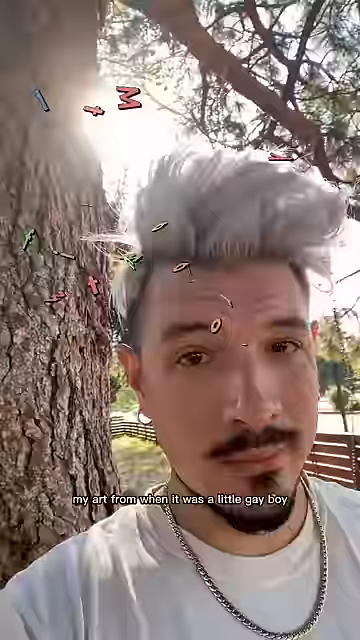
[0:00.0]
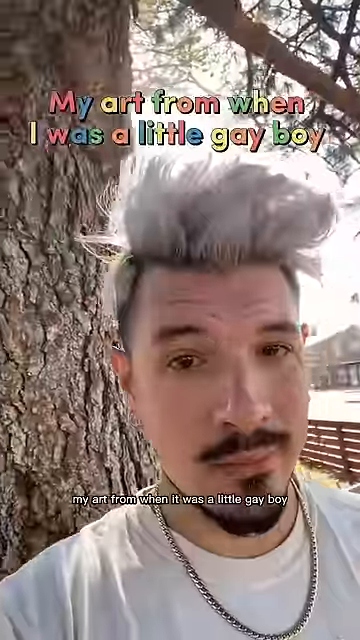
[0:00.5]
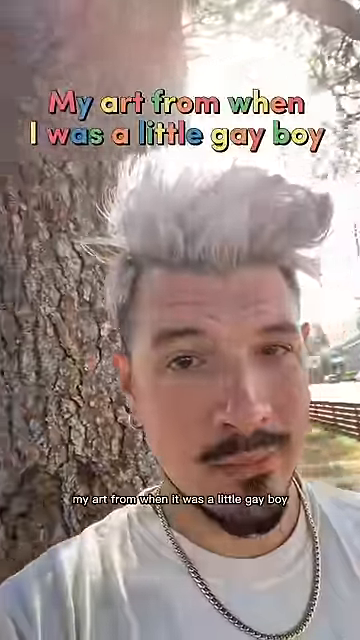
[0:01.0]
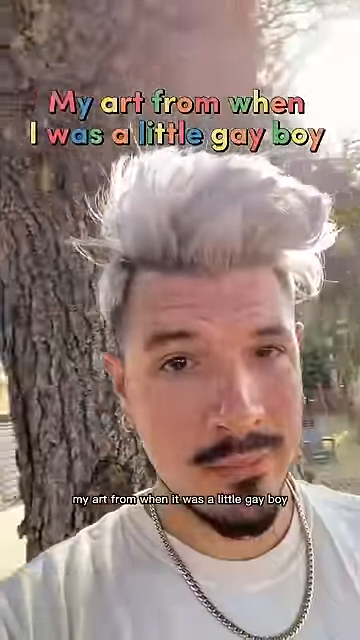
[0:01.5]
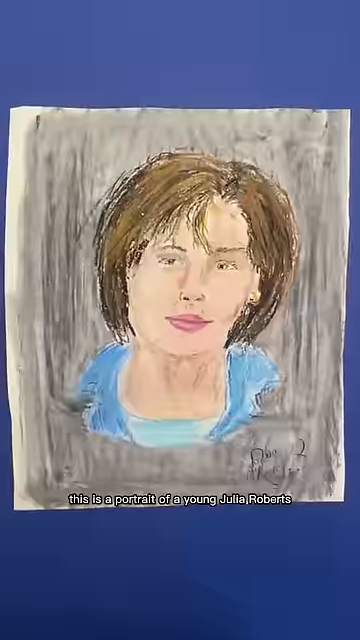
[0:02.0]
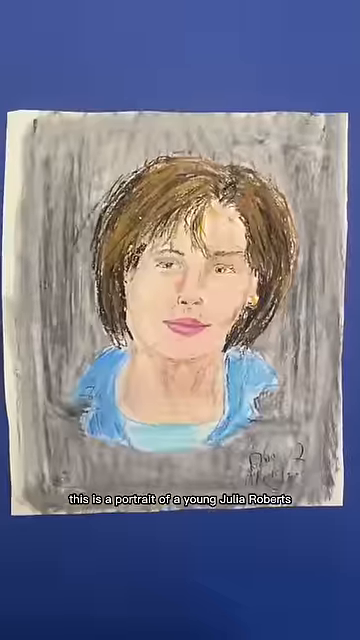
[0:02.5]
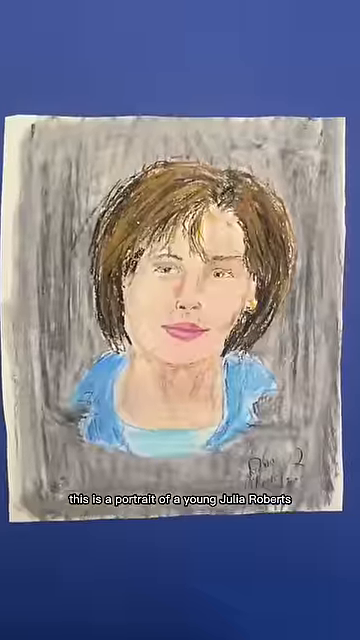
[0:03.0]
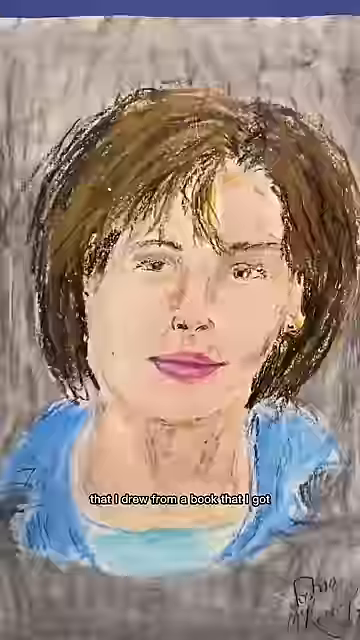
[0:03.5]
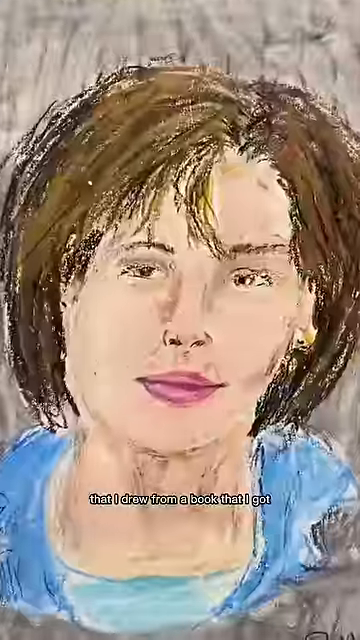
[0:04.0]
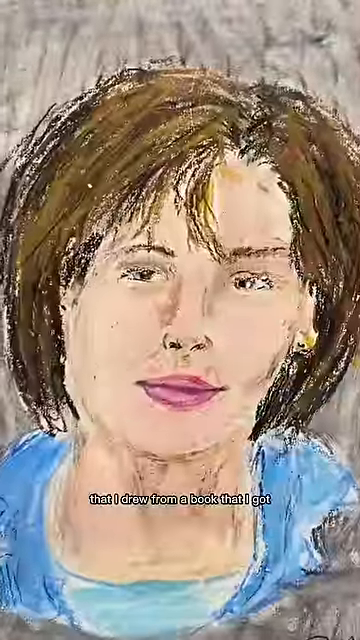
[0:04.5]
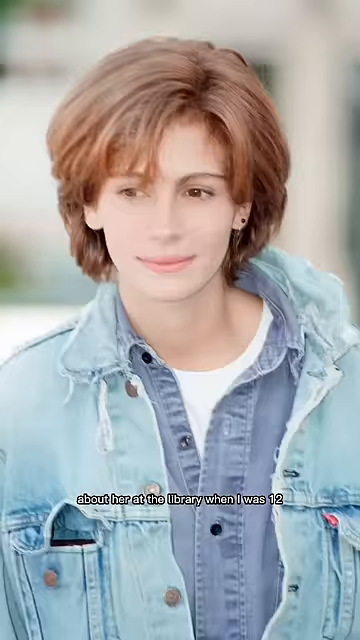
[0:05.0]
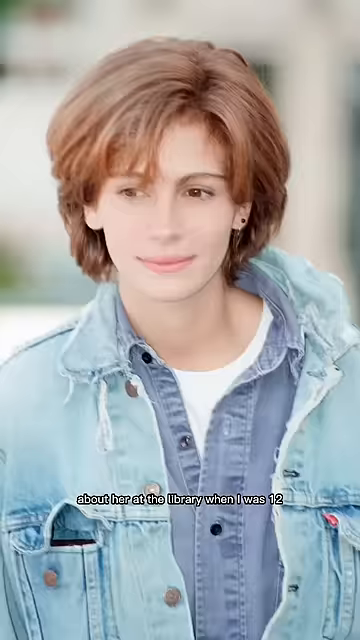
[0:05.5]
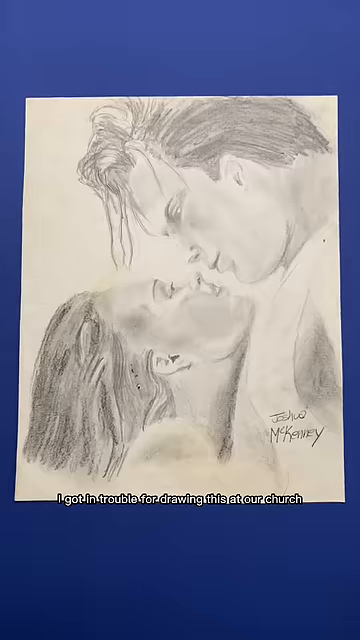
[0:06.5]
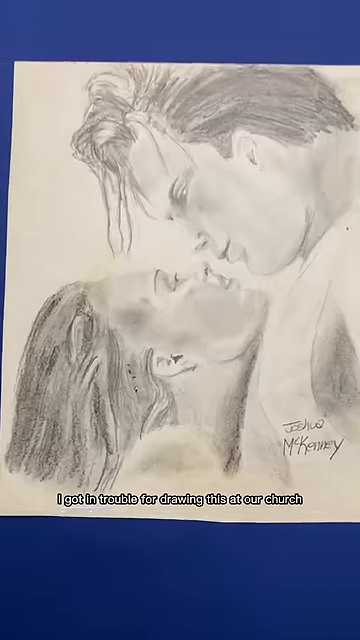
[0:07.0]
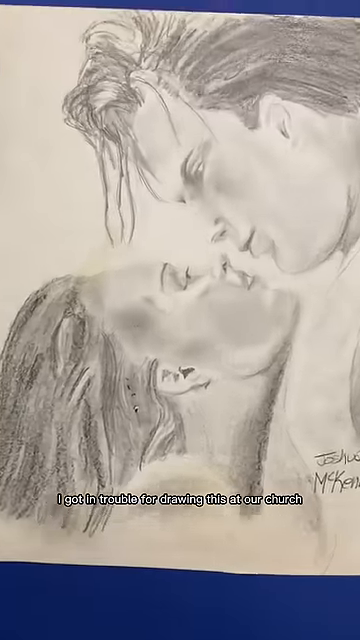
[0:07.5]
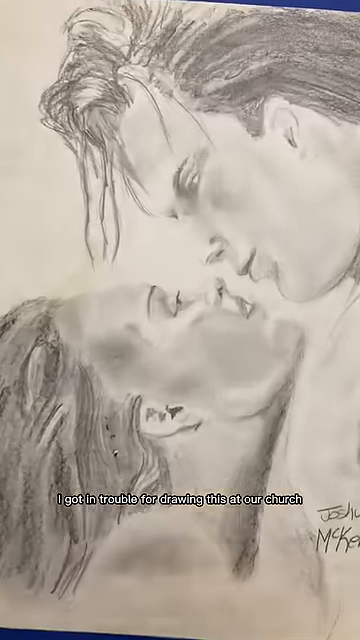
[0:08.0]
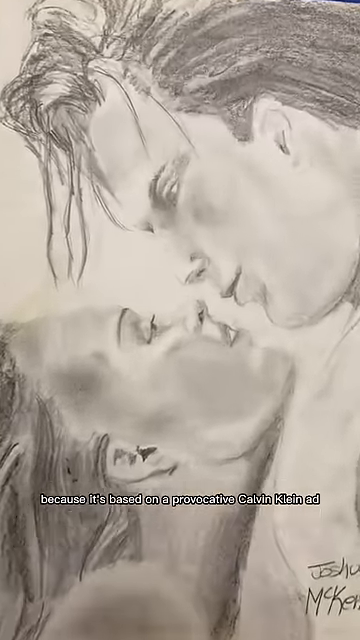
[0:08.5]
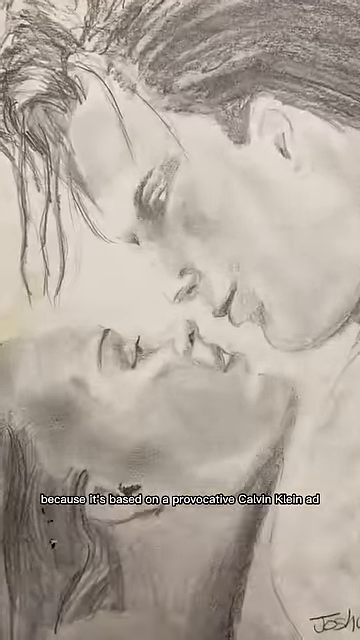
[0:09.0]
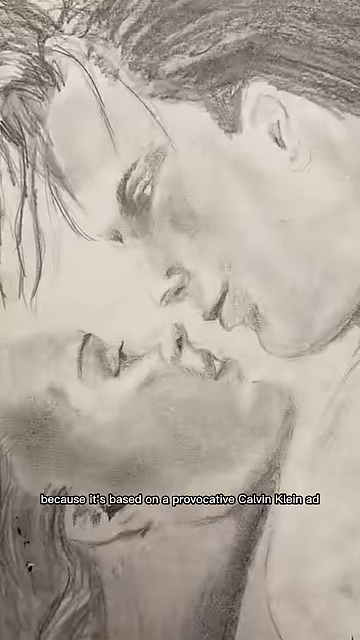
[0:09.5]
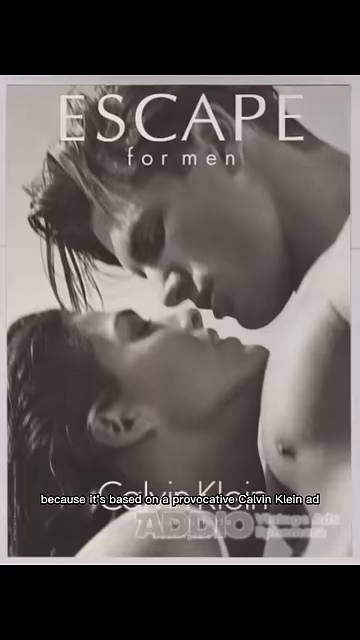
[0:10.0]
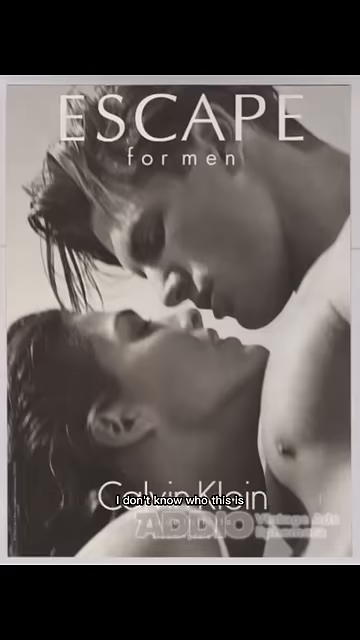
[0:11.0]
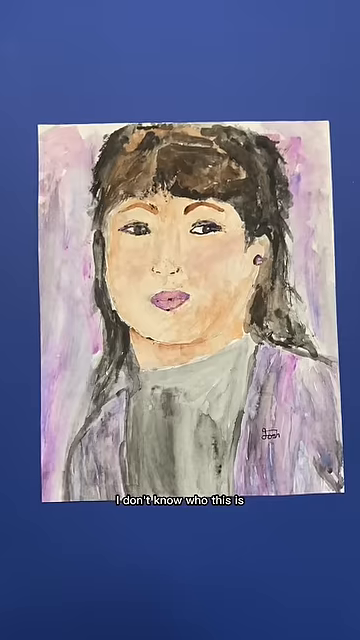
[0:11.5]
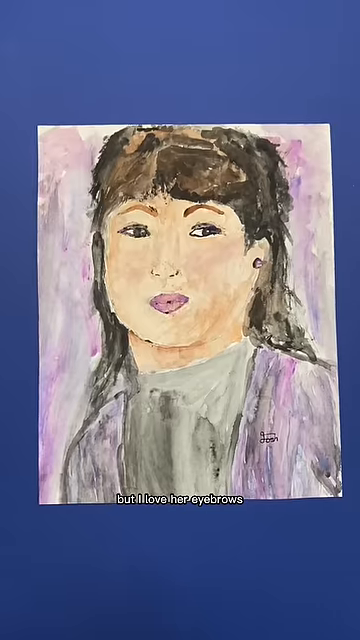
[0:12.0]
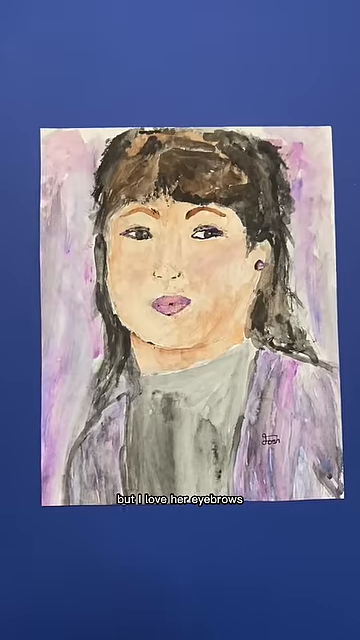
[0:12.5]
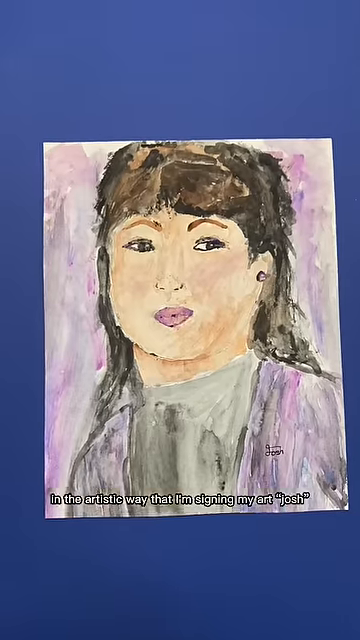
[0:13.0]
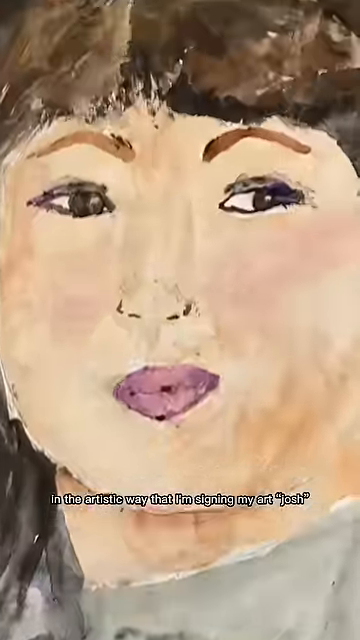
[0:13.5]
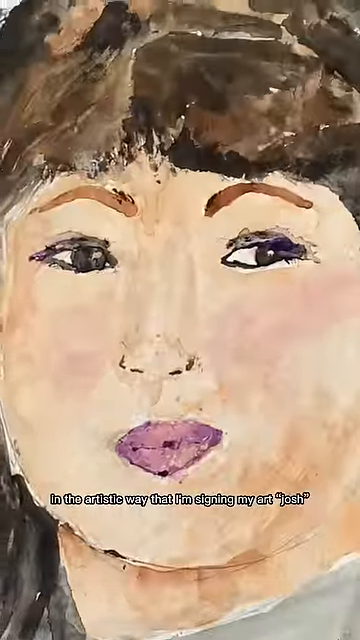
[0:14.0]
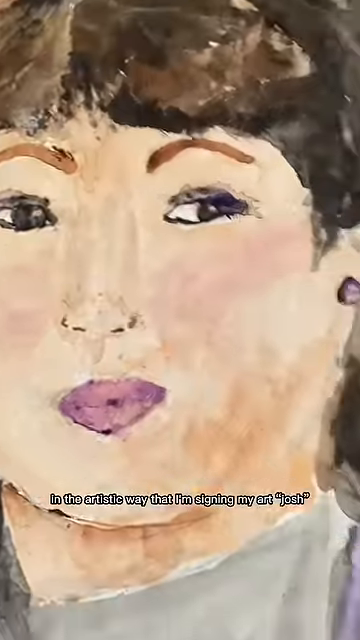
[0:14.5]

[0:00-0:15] A man with white hair, a mustache and a goatee wears a white t-shirt, a chain and earrings. Text at the top of the screen reads "my art from when I was a little gay boy," and the caption says the same. The camera pans around him as he stands outside next to a tree. The video then cuts to his art, with text reading "this is a portrait of a young Julia Roberts" over what looks like an oil painting of a woman, apparently Julia Roberts. He zooms in on the painting. Text says "I drew from a book that I got" and "about her at the library when I was 12," and a picture of a young Julia Roberts is shown. Next, text reads "I got in trouble for drawing this at our church" over what looks like a pencil drawing with lots of shading of two people looking at each other longingly, about to kiss, followed by "because it's based on a provocative Calvin Klein ad." The Calvin Klein ad is then shown: a shirtless man looks over a woman in a bikini, about to kiss her. Text reads "I don't know who this is" as the video cuts to a different picture of a girl that looks like a painting, with text saying "but I love her eyebrows" and referring to him signing his art "Josh." He then zooms in to show his signature on the painting.